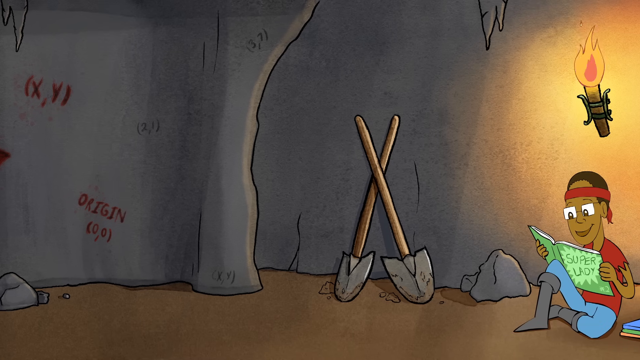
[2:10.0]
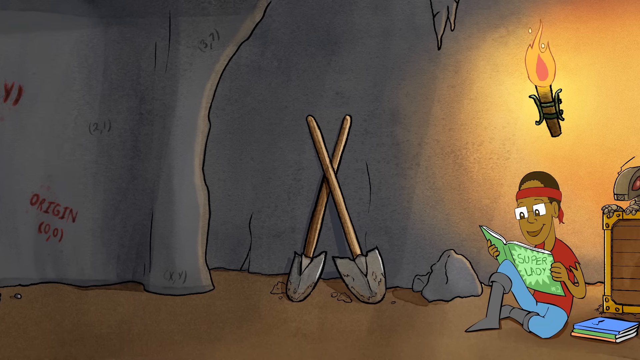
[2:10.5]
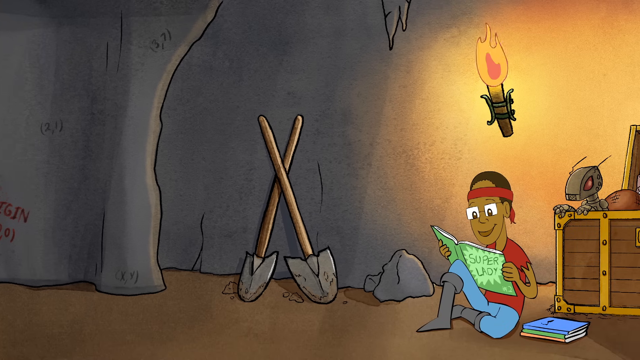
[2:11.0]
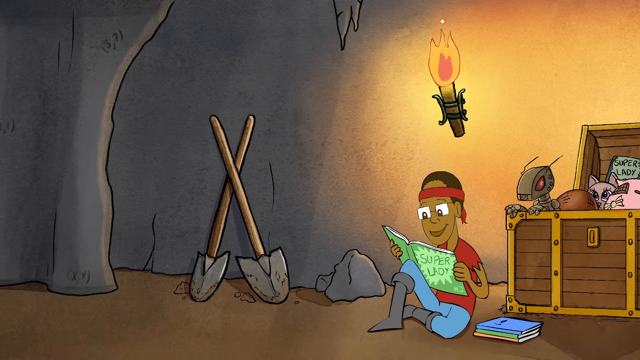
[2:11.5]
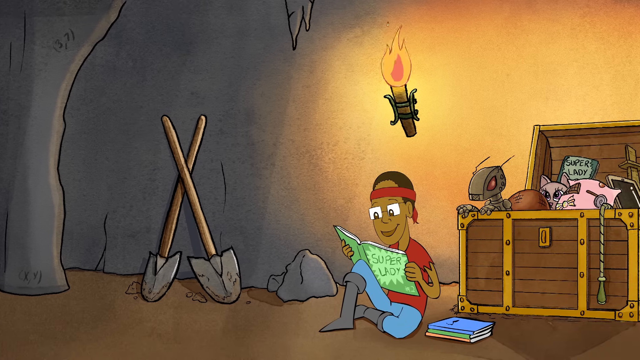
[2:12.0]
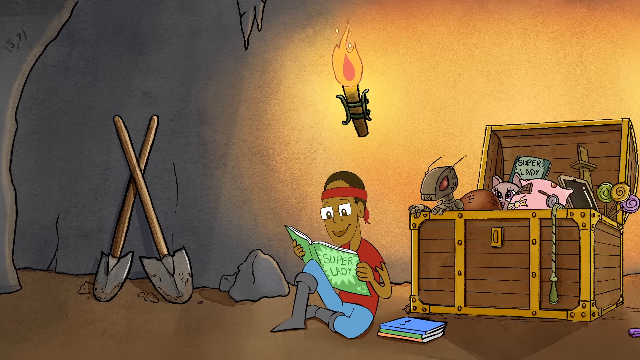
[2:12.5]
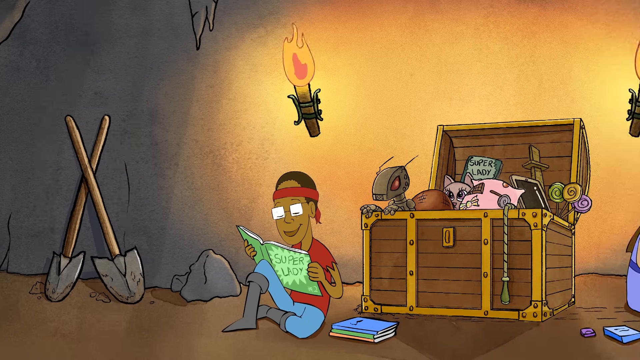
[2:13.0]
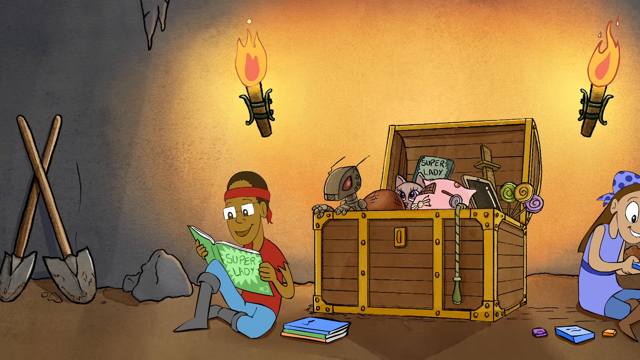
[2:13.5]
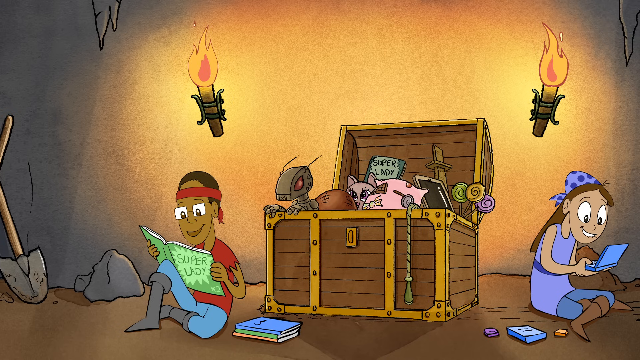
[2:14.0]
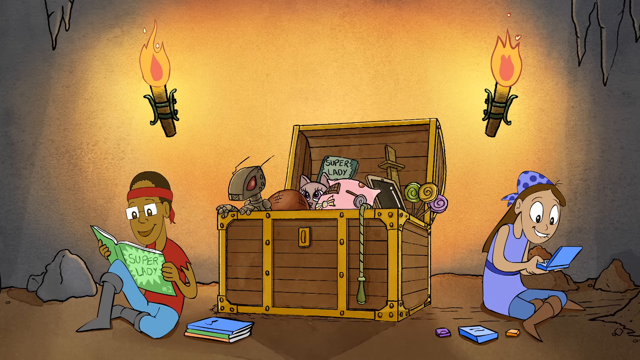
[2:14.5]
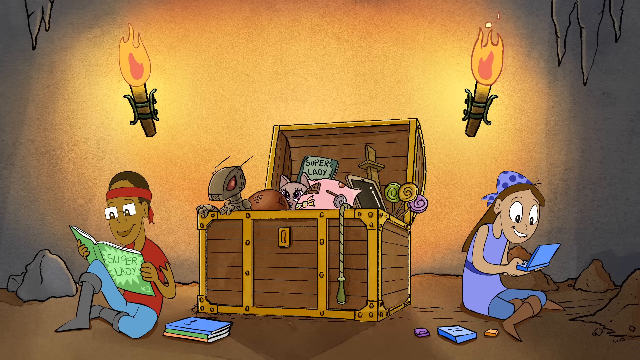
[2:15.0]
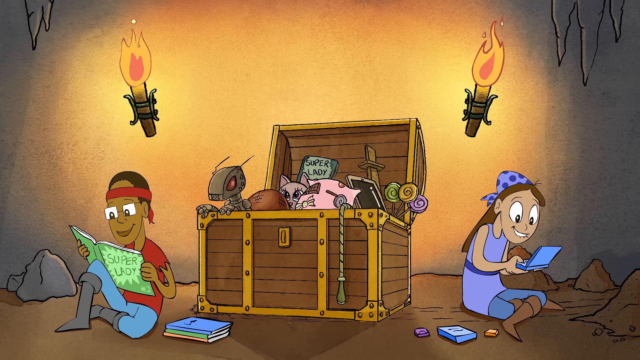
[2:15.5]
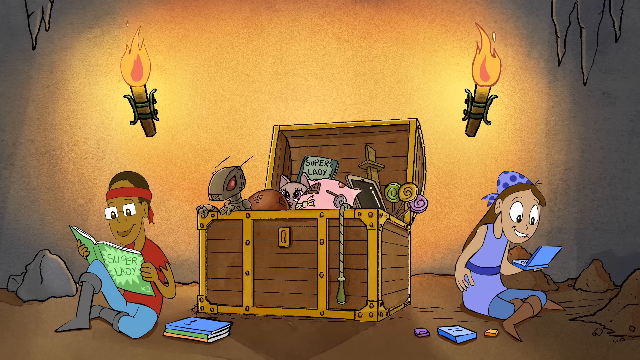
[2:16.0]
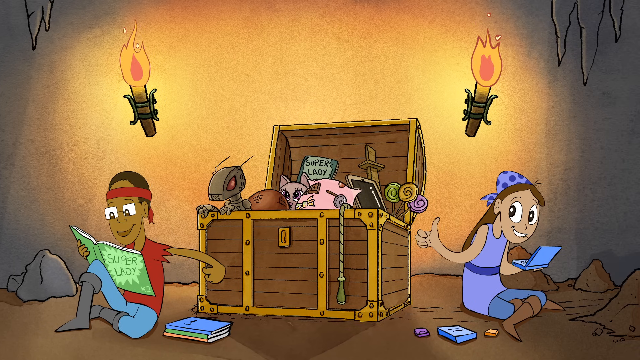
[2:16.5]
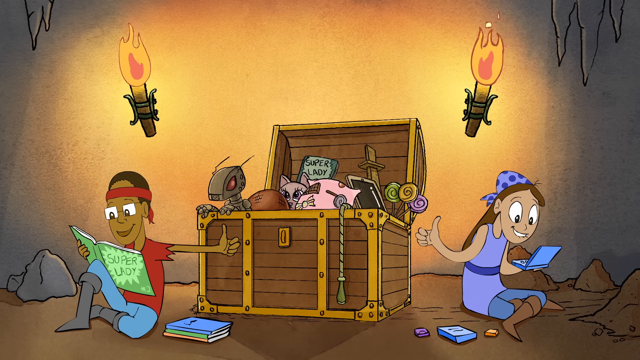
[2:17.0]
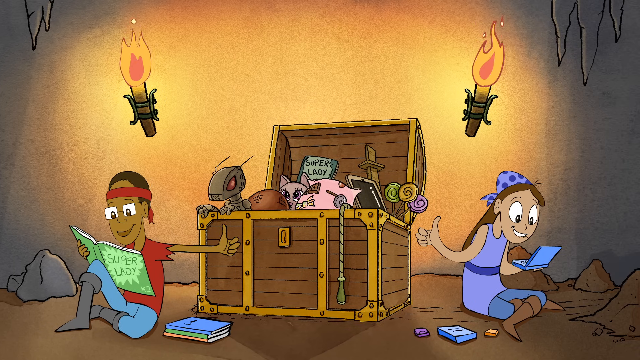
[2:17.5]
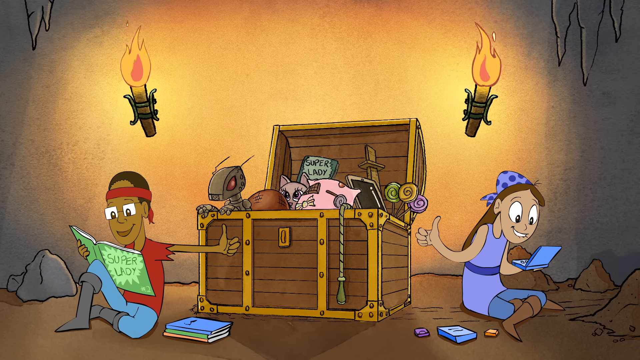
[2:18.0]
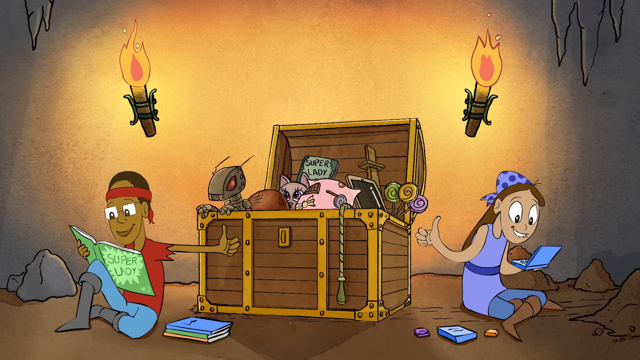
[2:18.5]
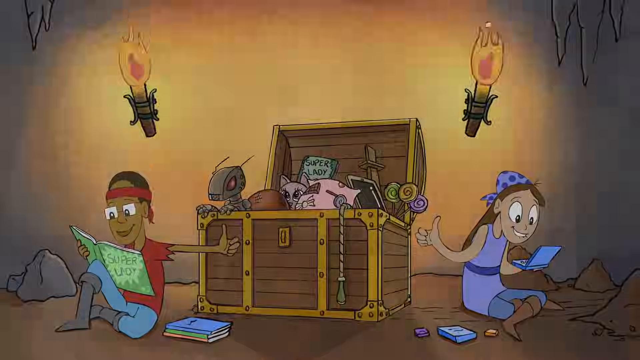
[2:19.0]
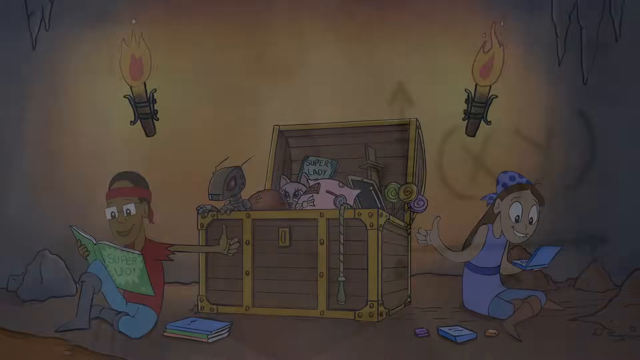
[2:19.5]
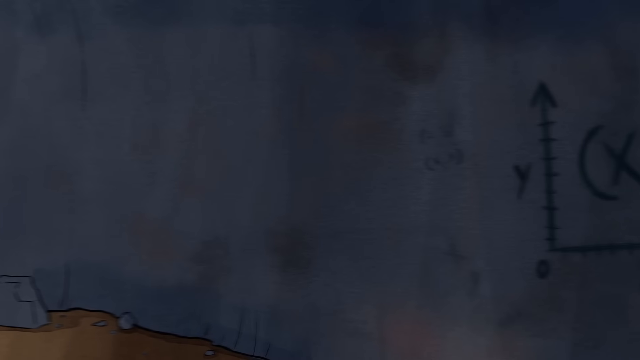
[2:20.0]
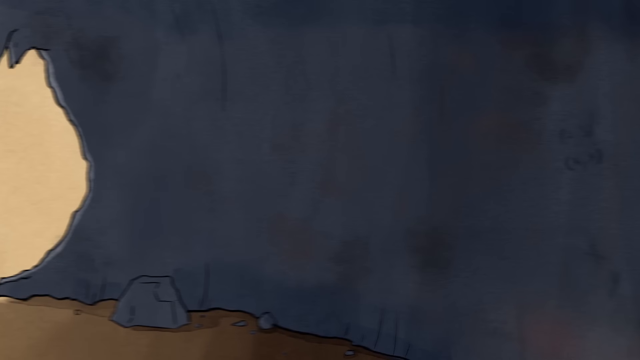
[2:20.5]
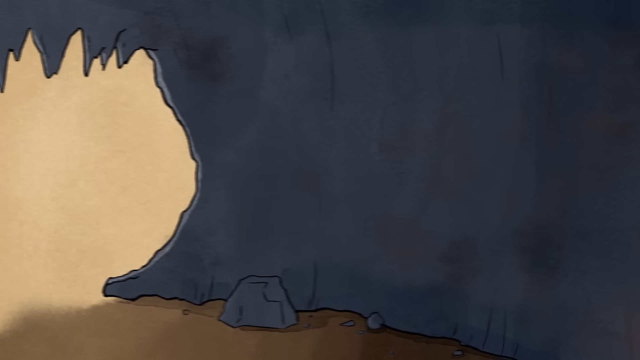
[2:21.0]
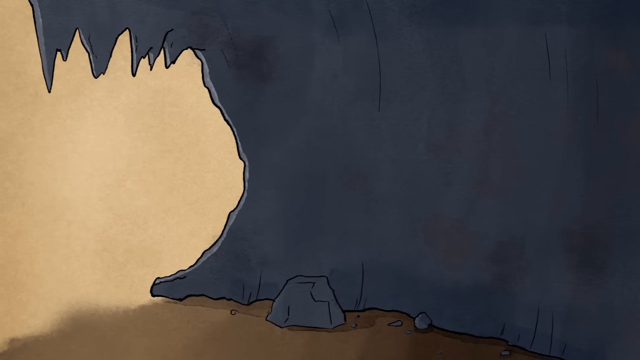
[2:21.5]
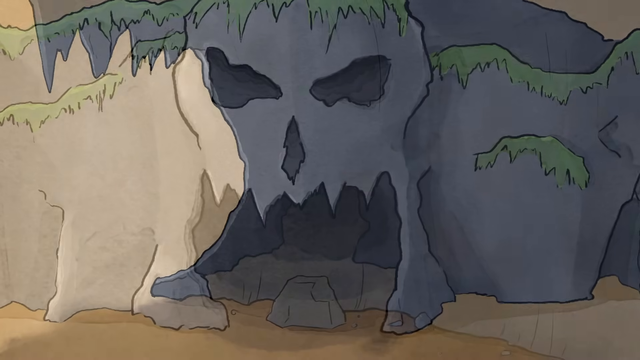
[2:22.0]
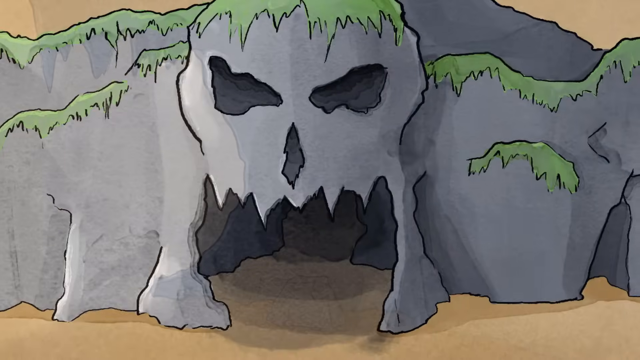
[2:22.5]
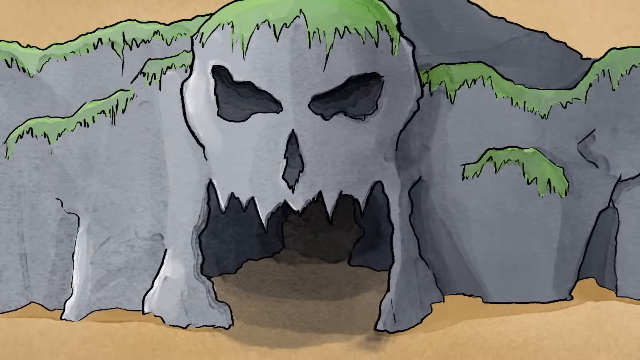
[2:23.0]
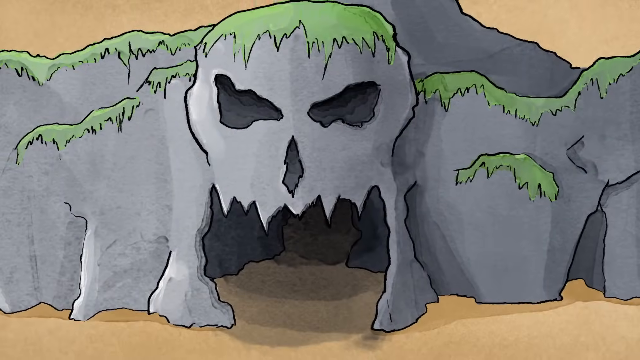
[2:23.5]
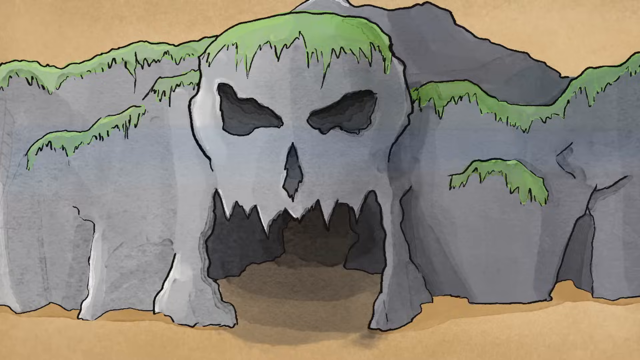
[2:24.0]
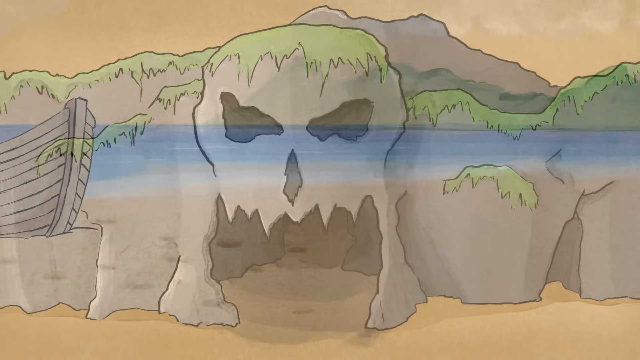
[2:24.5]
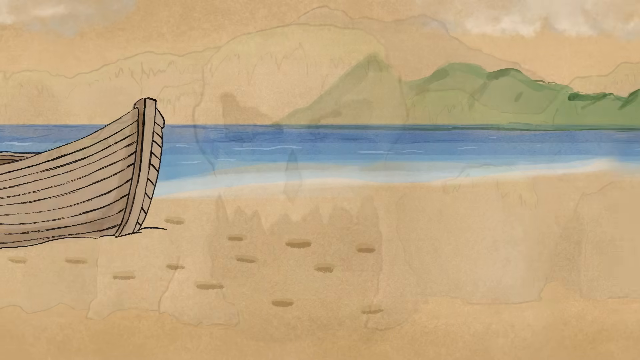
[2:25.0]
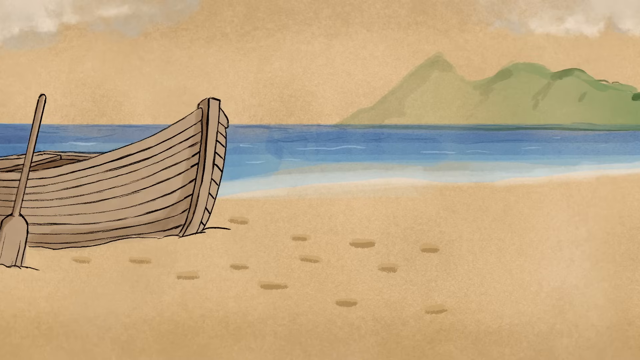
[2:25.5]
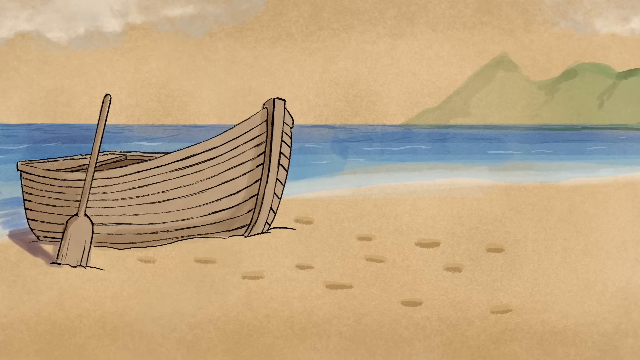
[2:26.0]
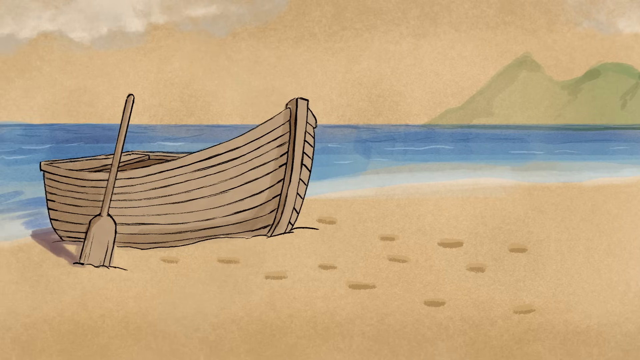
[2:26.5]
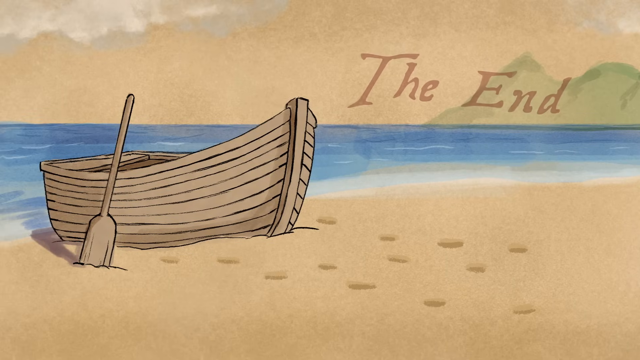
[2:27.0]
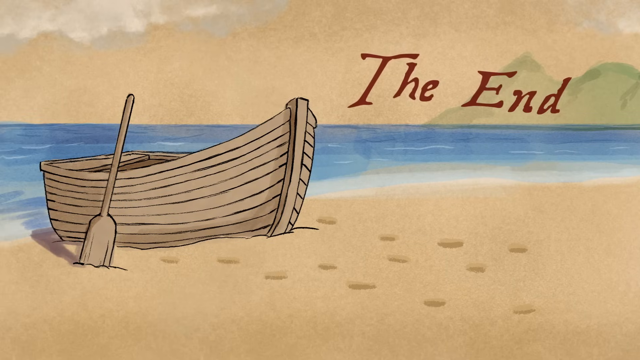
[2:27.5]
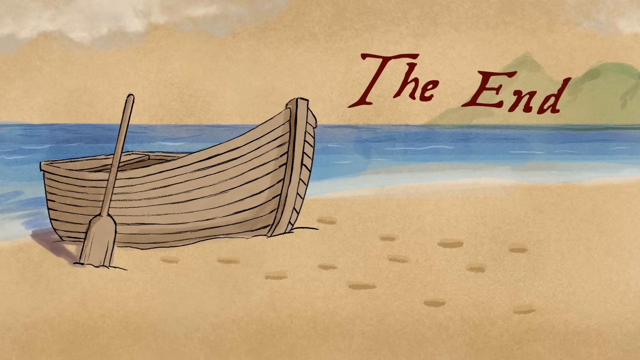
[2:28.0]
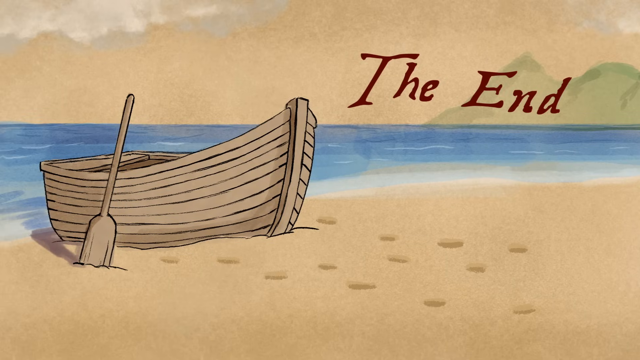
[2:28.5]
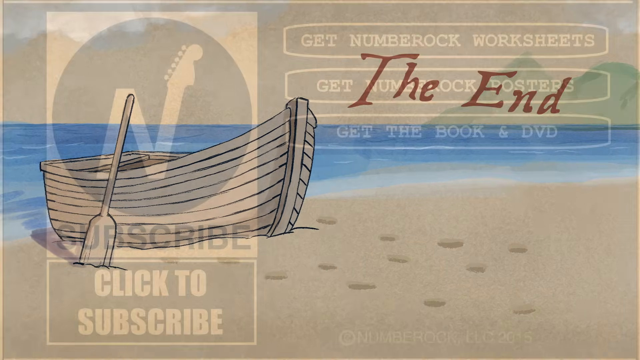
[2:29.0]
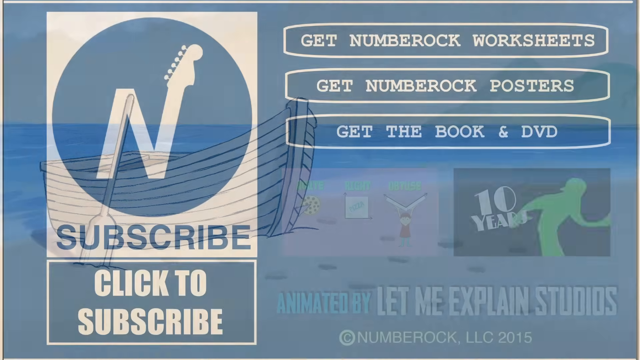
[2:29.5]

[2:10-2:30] The boy and the woman find the place they were searching for. The boy is reading a book, and there are many things such as a robot, a toy, a clone, candy, a book named "super lady" and fire. The woman is using something that possibly looks like makeup. Together they make an OK sign, and the story comes to an end.